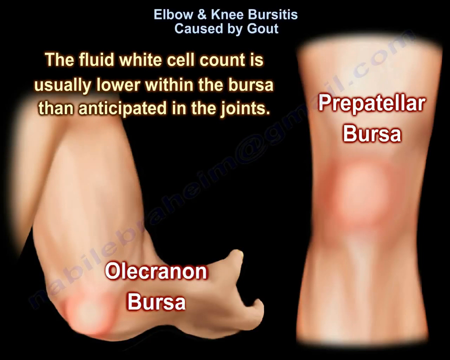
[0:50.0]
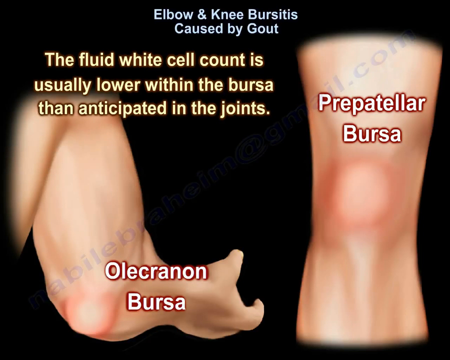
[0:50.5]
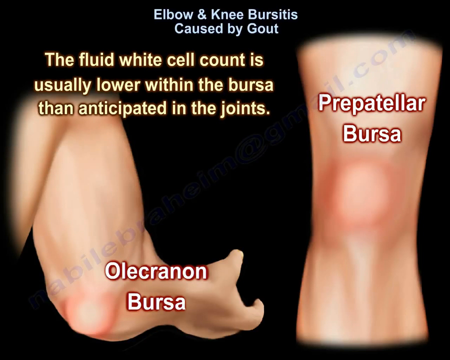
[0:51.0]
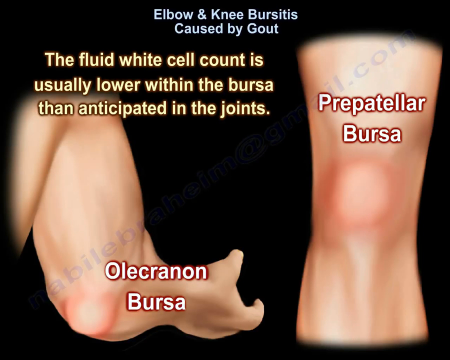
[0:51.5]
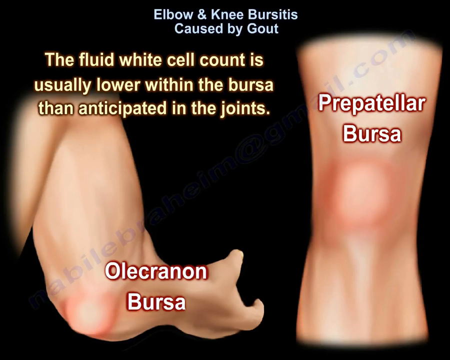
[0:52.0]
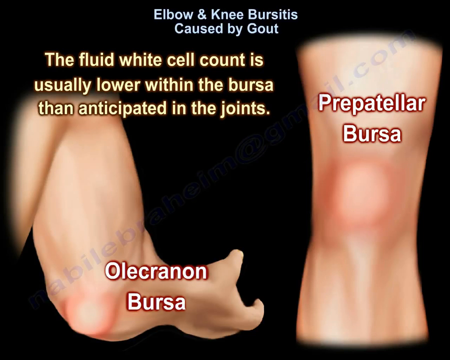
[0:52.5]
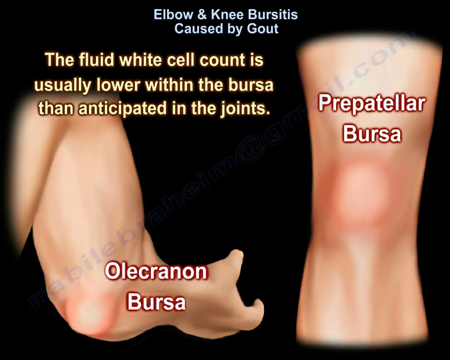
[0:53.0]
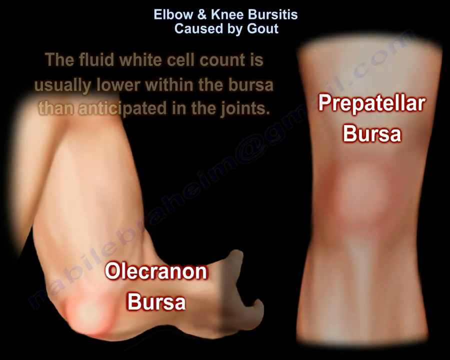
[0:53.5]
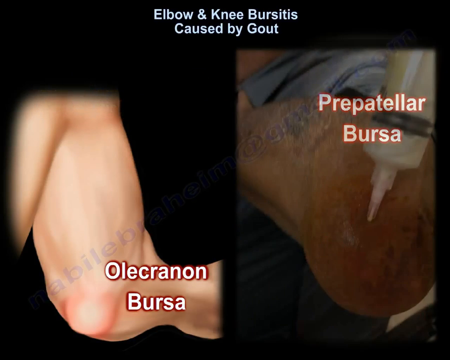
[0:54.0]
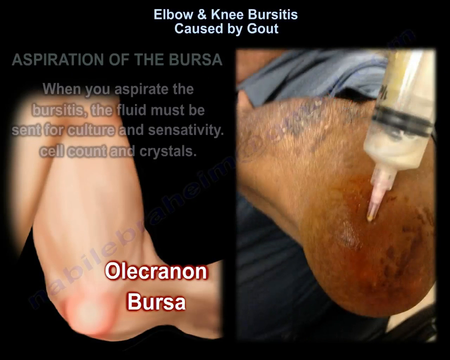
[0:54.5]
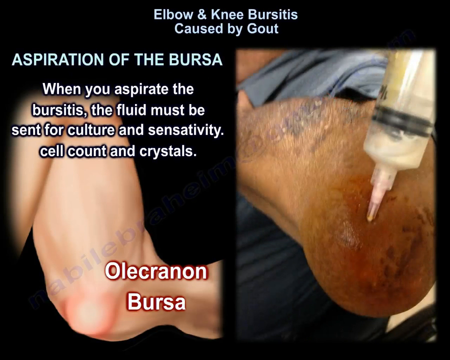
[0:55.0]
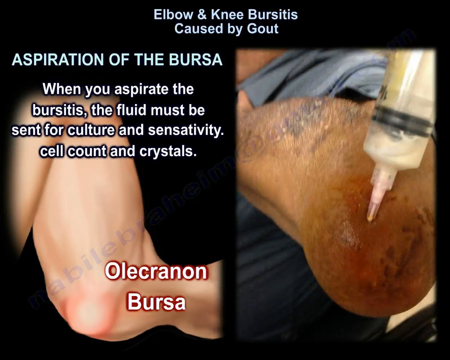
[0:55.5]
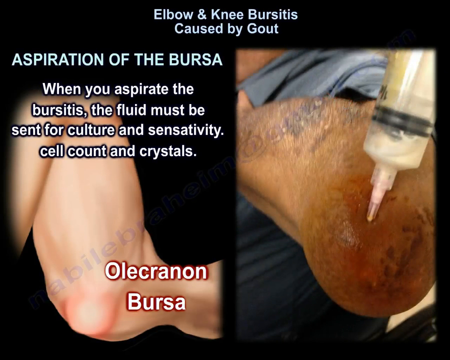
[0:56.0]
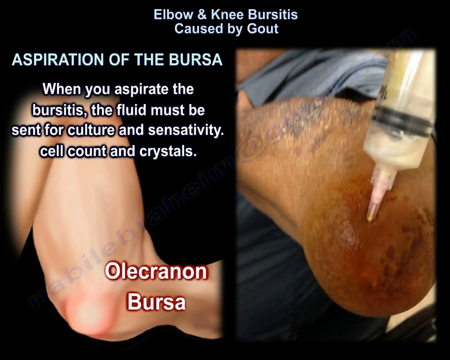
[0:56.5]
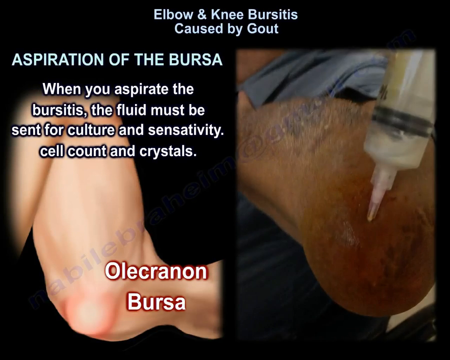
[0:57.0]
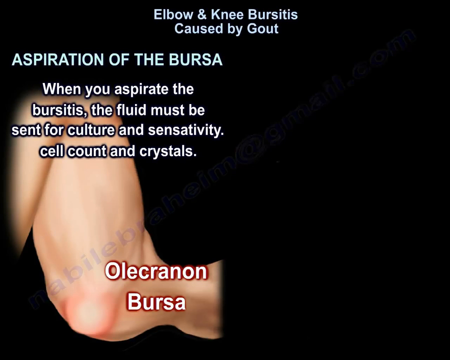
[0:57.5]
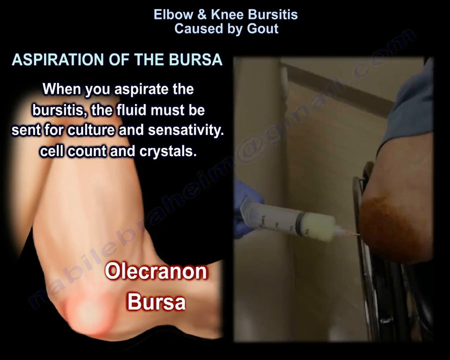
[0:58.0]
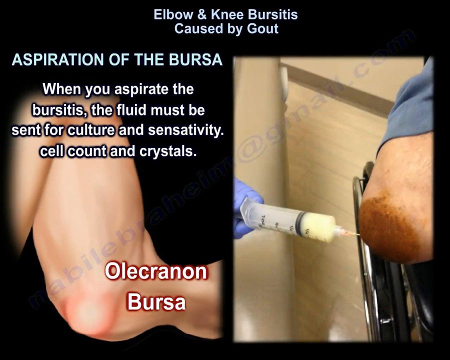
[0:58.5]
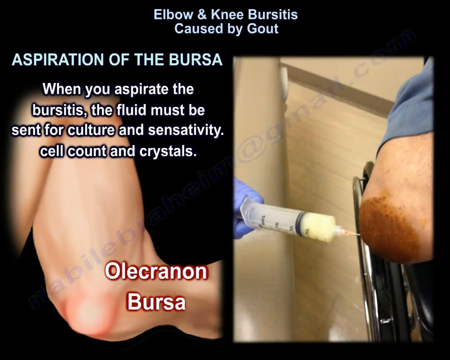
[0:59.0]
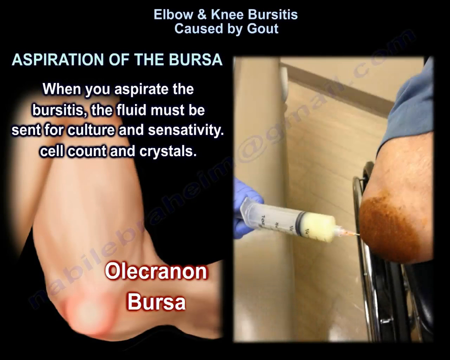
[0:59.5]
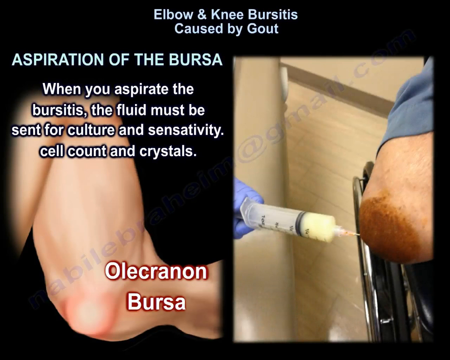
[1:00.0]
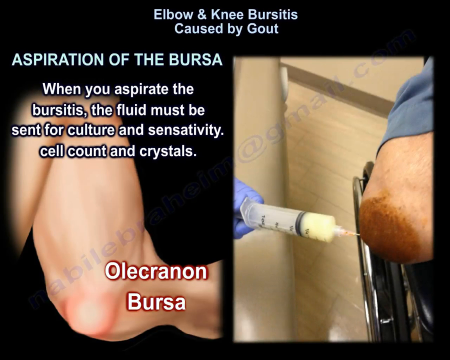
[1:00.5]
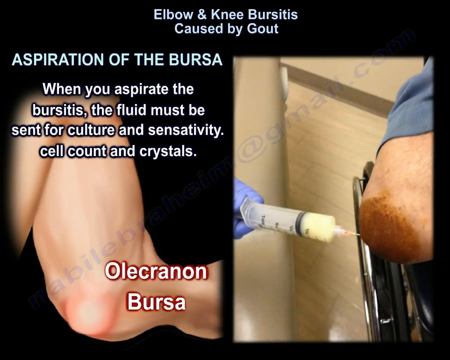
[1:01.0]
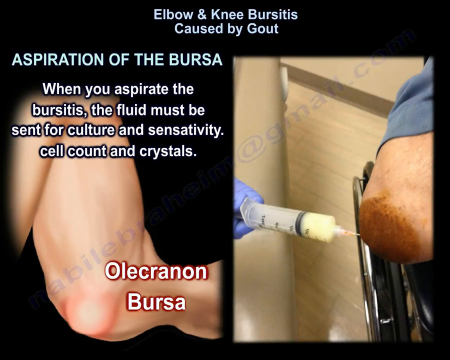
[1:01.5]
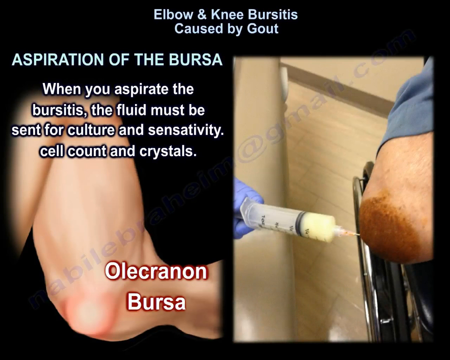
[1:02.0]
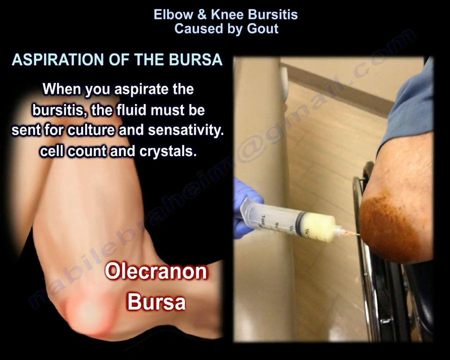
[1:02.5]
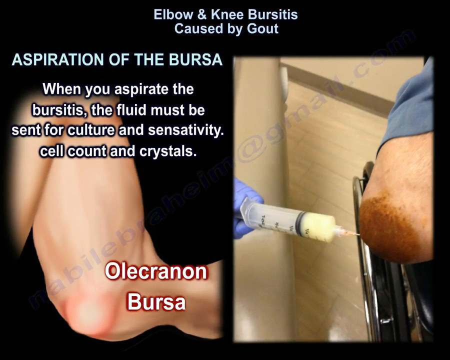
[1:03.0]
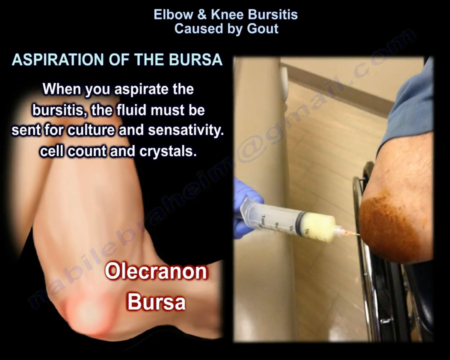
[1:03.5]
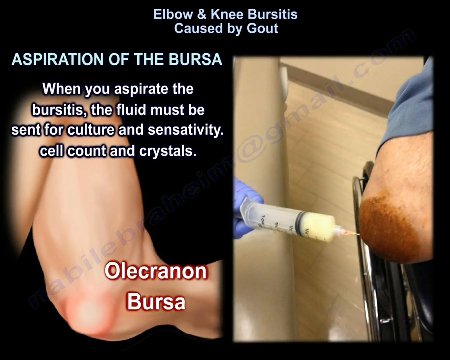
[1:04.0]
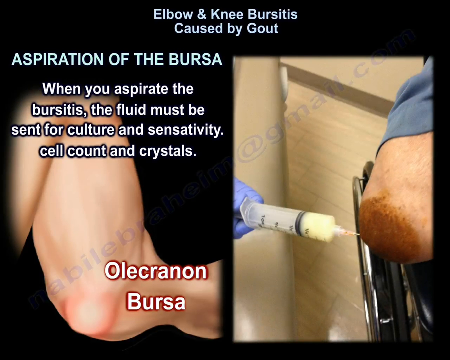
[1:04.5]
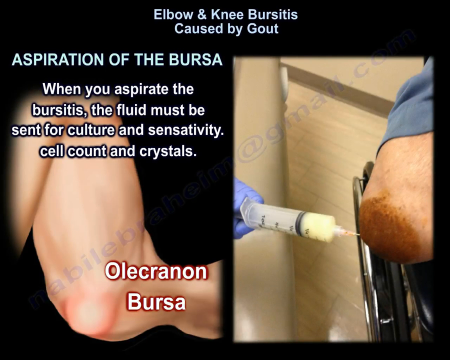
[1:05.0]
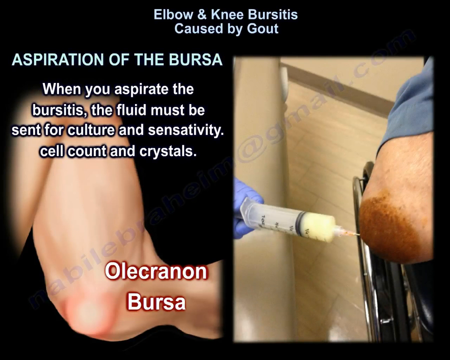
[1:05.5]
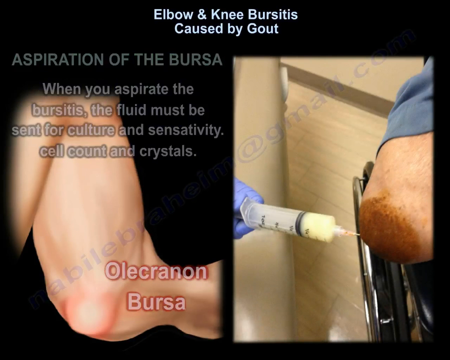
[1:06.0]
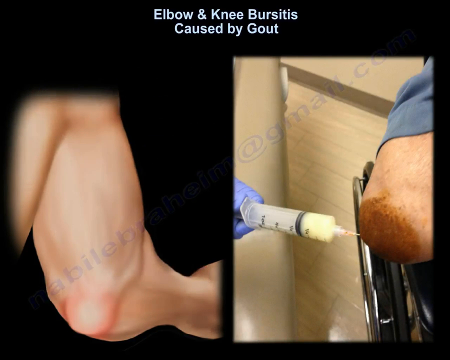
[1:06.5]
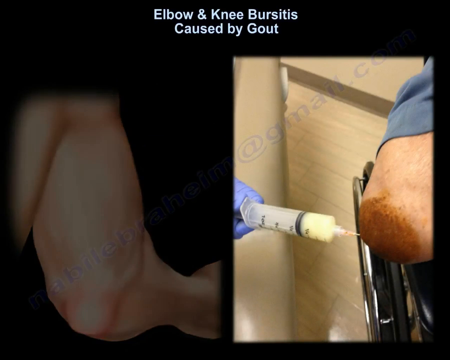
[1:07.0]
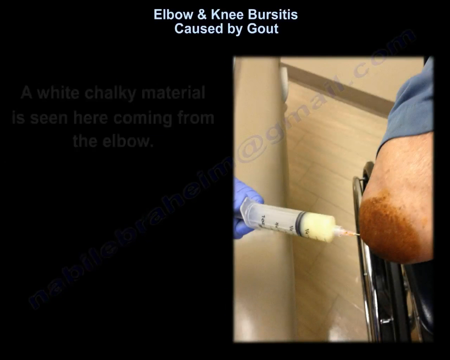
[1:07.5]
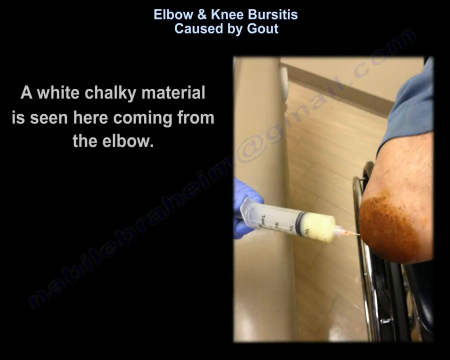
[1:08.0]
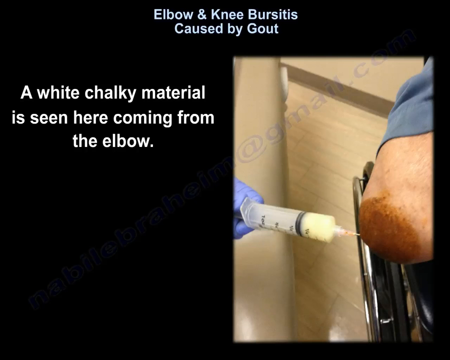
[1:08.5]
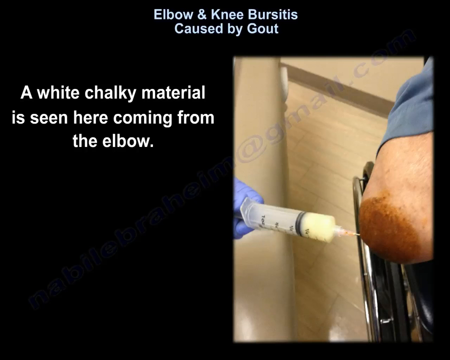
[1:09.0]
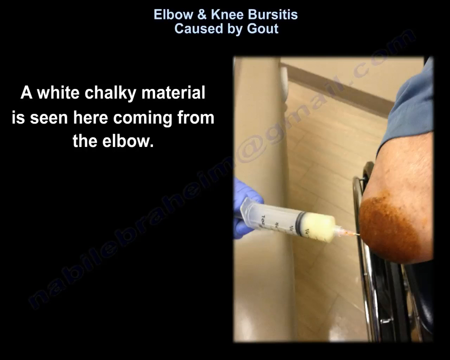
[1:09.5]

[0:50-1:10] An image of a knee and an image of an elbow are shown on a black background. Over the knee it reads "pre-patellar bursa" and over the elbow "olecranon bursa", with a small title reading "elbow and knee bursitis caused by gout". Yellow-gold text reads "the fluid white cell count is usually lower within the bursa than anticipated in the joints". The knee picture then disappears and a real-life person's elbow is shown with a needle over it. The elbow looks inflamed and red, and the needle looks like it is pulling fluid out of it. To the left of the image it reads "aspiration of the bursa" and "when you aspirate the bursitis the fluid must be set for culture and sensitivity cell count and crystals". The images apparently show a doctor or medical professional collecting the fluid to test it. A second image shows another person with gout and a sample being collected.